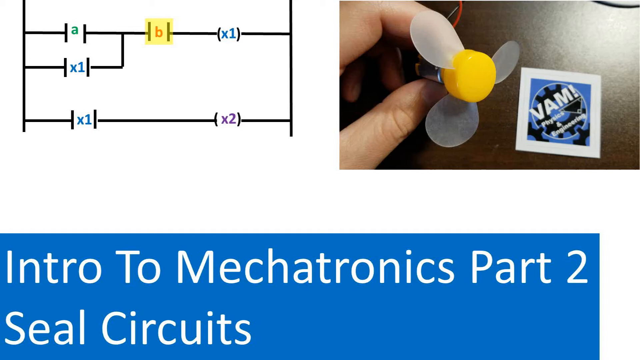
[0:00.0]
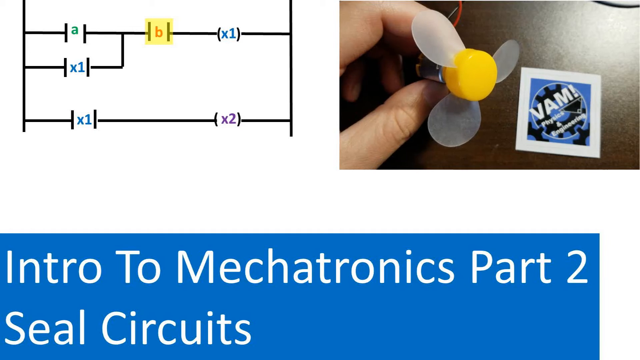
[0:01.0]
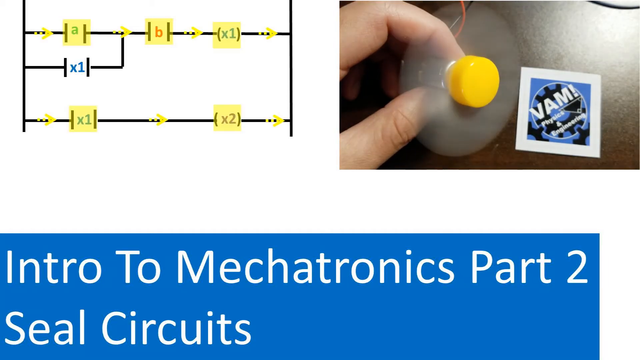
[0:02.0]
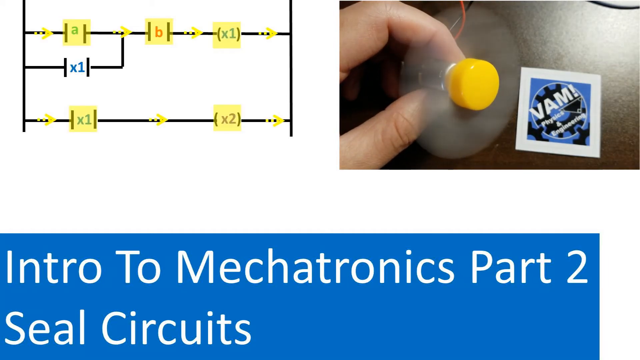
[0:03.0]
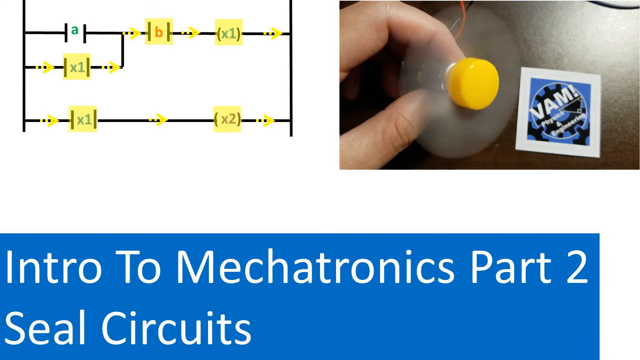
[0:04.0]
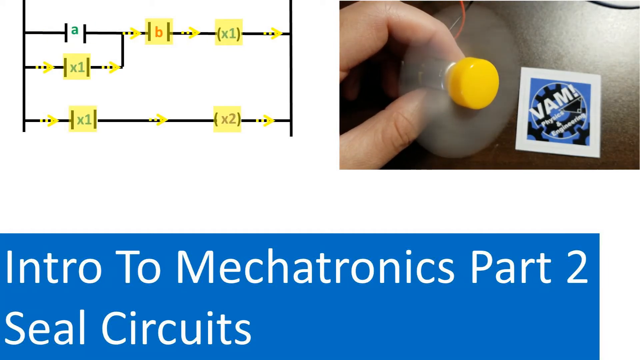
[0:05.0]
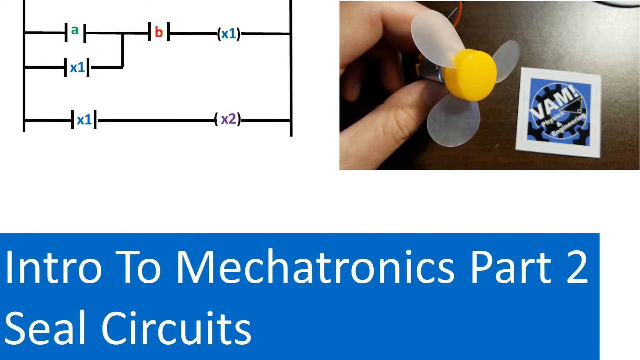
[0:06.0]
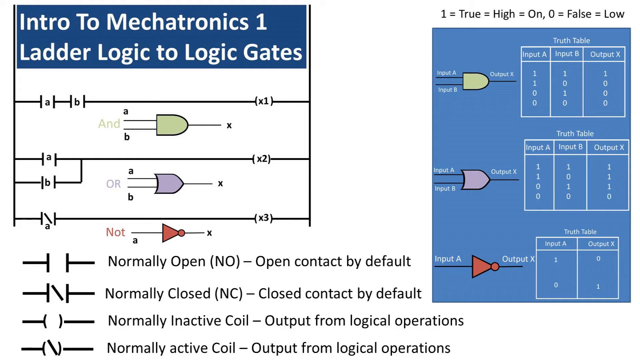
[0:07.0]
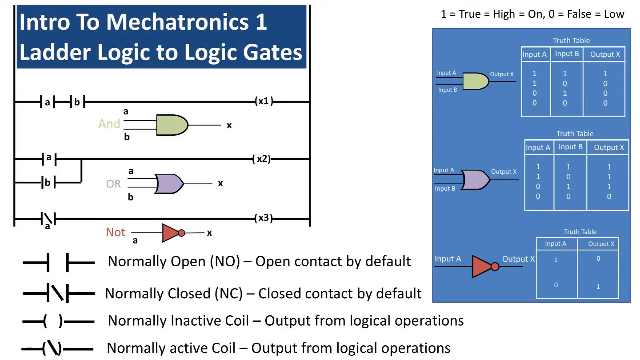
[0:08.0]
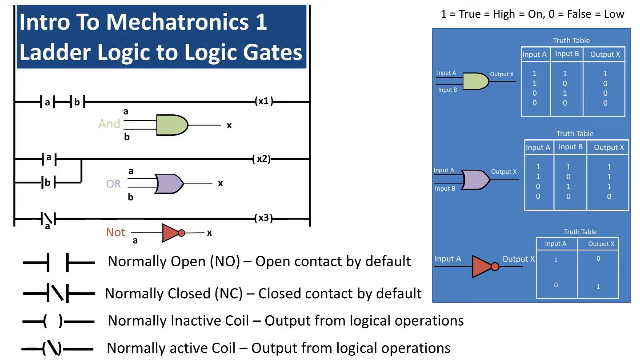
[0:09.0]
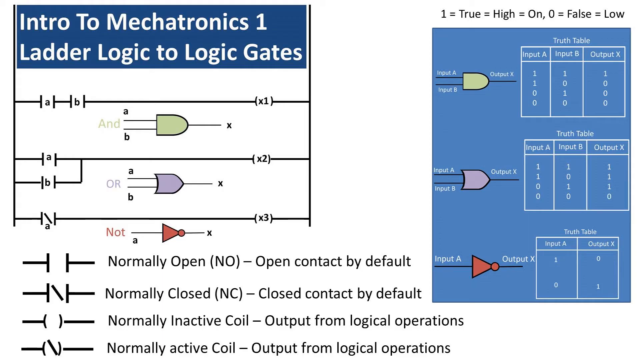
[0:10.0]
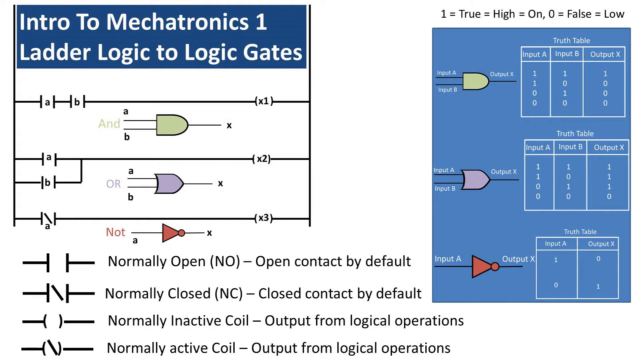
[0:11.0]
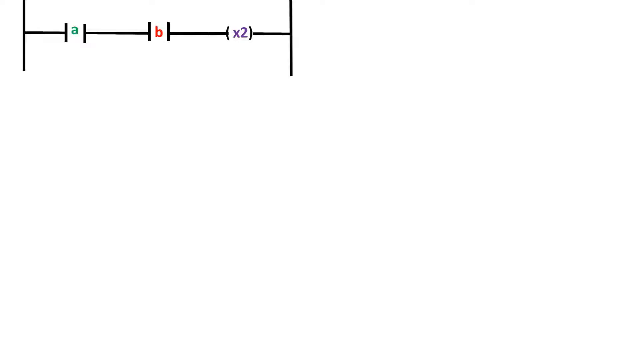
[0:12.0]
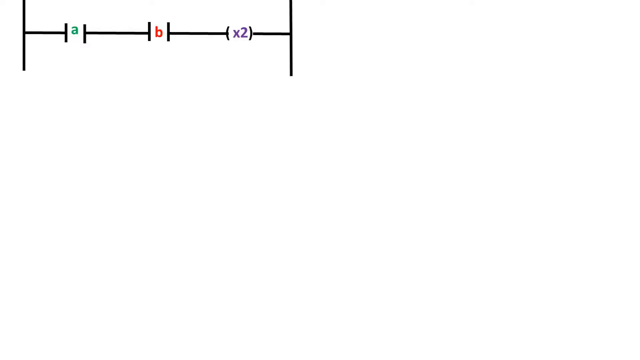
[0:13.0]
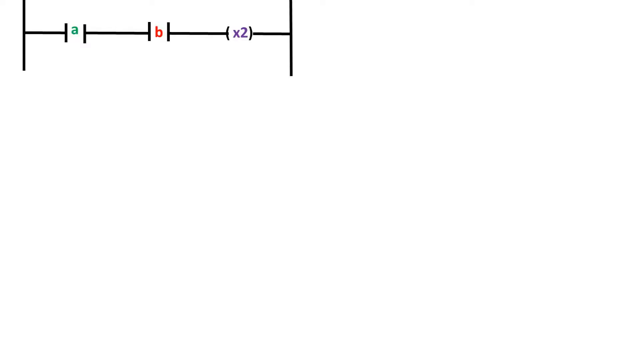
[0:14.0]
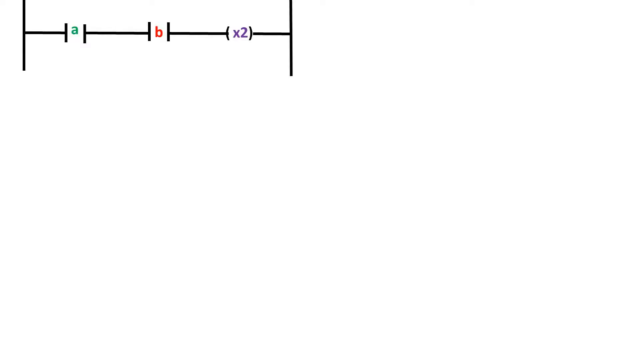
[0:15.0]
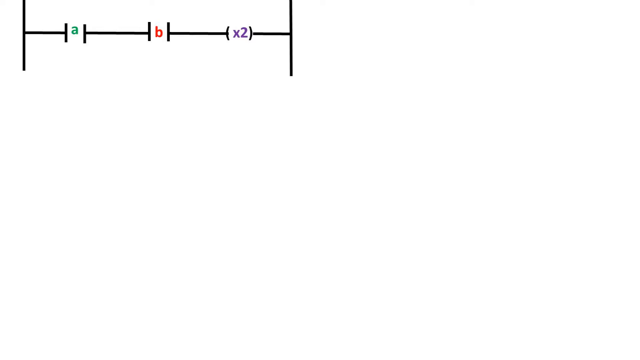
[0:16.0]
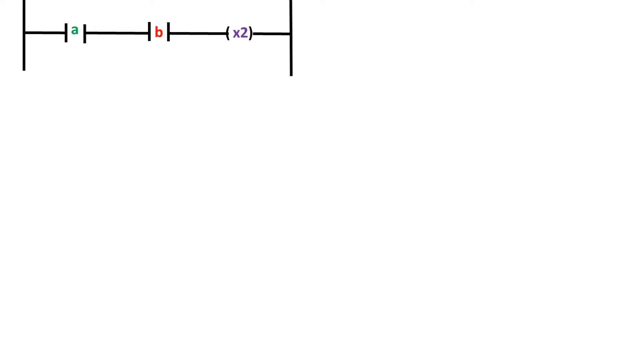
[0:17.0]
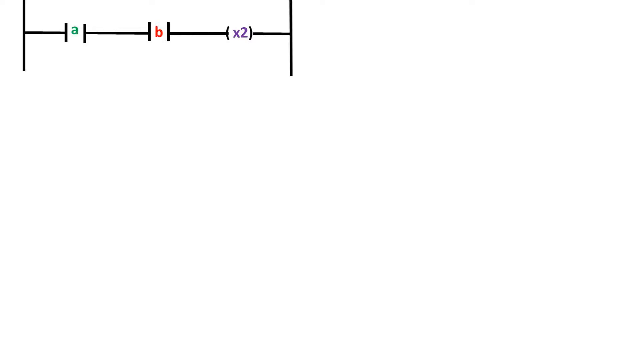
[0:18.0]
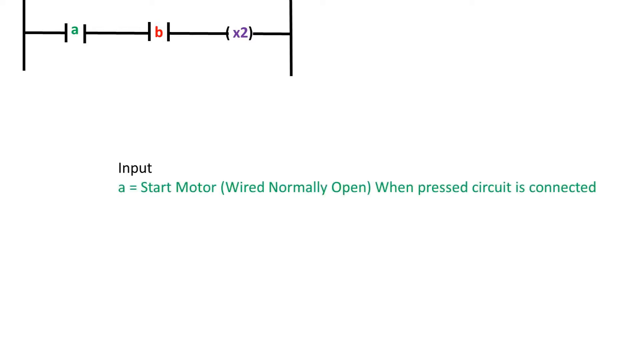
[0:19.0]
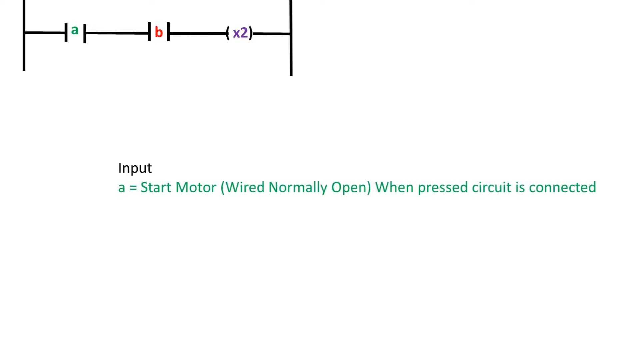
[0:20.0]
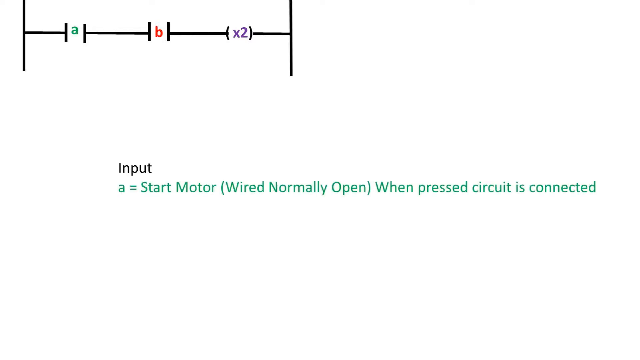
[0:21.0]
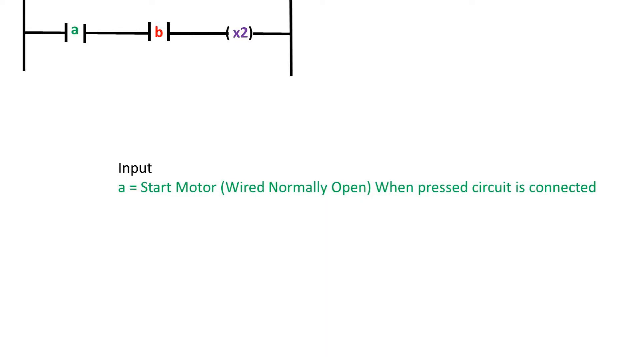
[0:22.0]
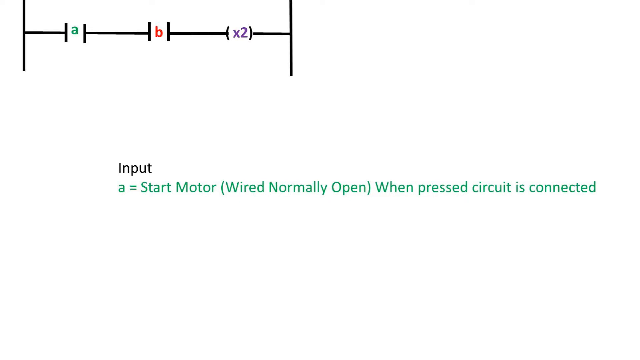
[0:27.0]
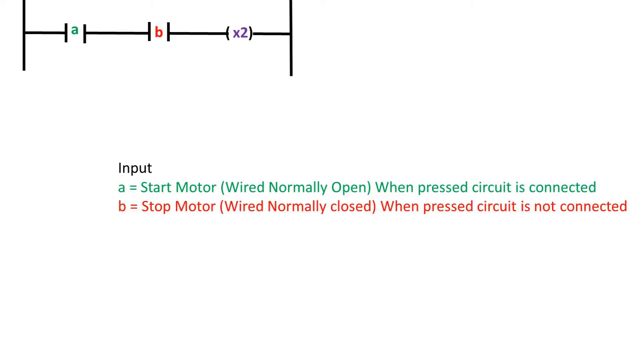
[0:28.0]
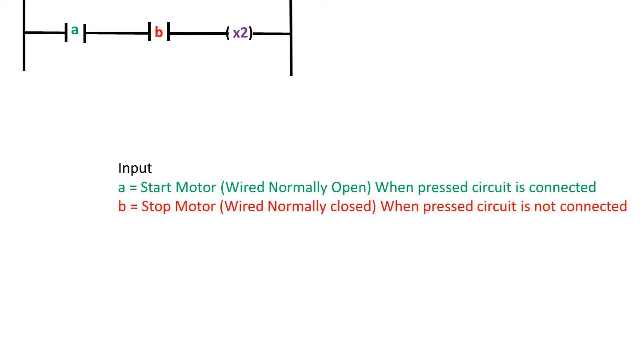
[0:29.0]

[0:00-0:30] The title "Intro to Mechatronics part 2" appears, and what seems to be an experiment is introduced. Notes are shown about "Mechatronics 1 ladder logic to logic gate", explaining how to proceed. "Input" is written in black, and "start motor" is written in green with "wired normally open when pressed, circuit is connected". Next, "B stop motor wired" is written in red. The instructions for the experiment are written in black, blue and white, making them very colorful. As the experiment runs, a person's hand appears, with fingers controlling the thing they are touching.